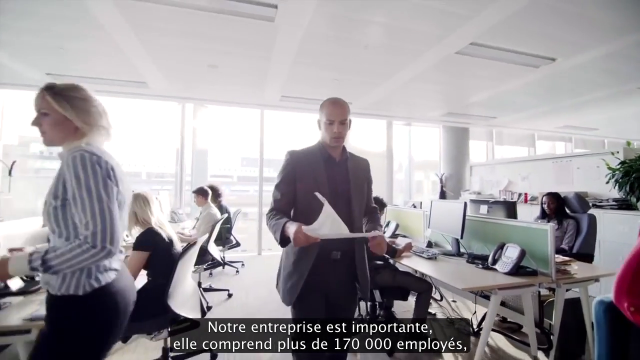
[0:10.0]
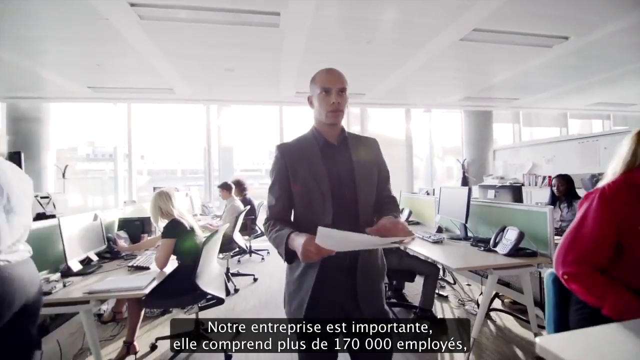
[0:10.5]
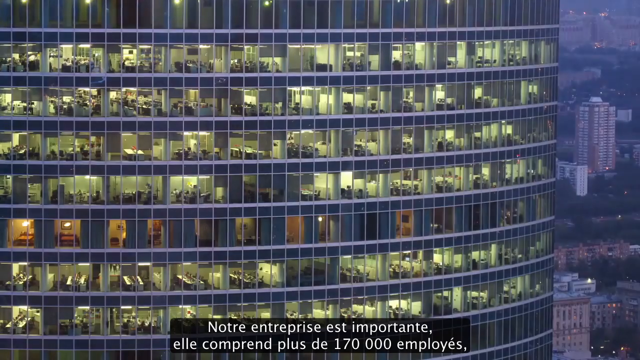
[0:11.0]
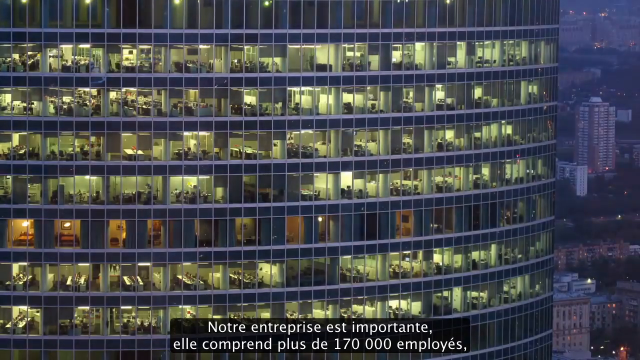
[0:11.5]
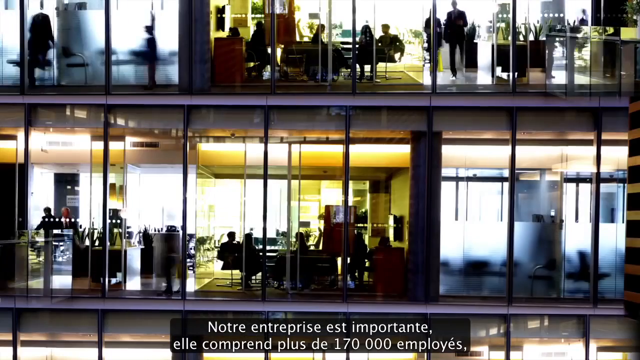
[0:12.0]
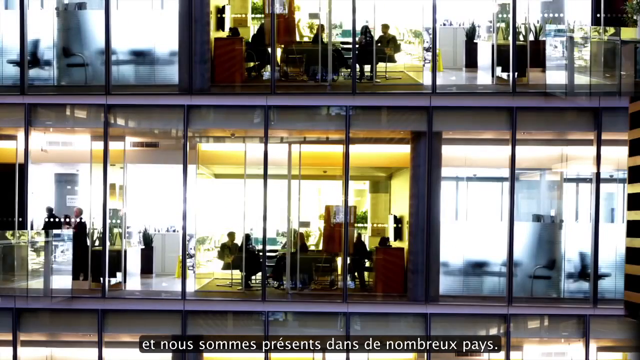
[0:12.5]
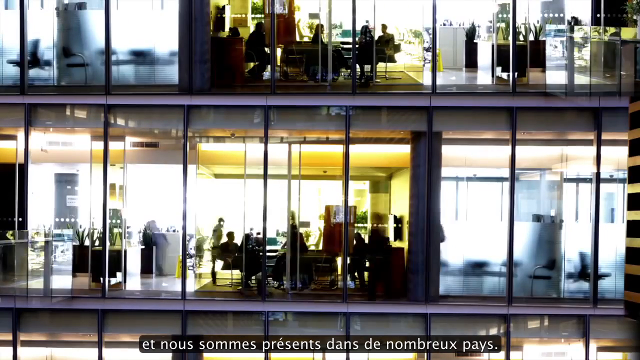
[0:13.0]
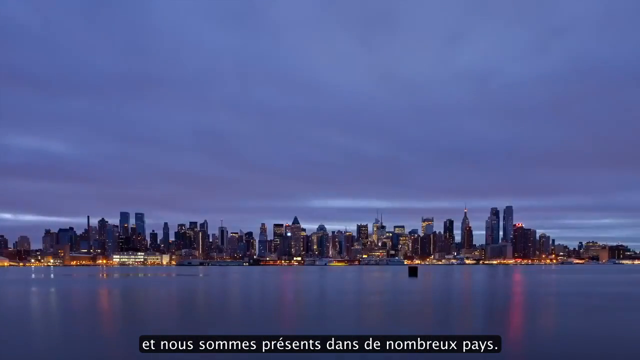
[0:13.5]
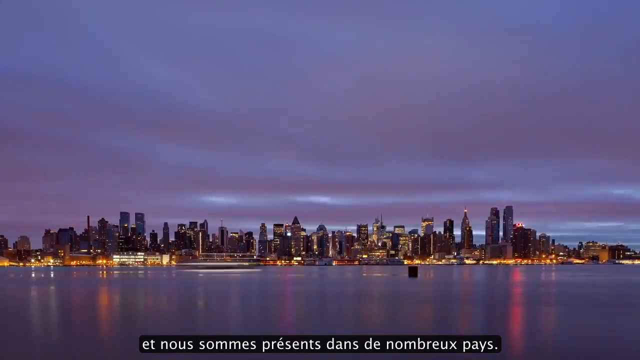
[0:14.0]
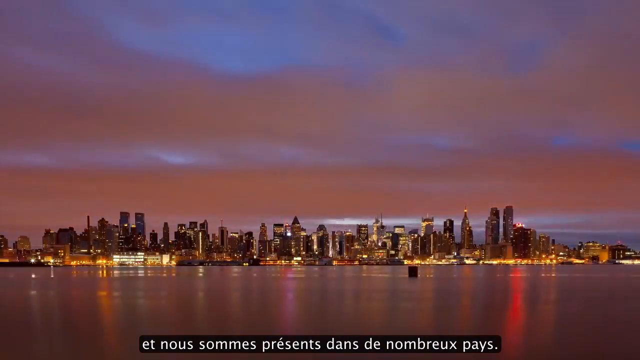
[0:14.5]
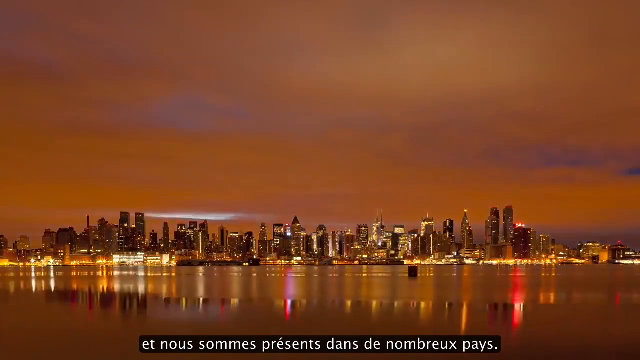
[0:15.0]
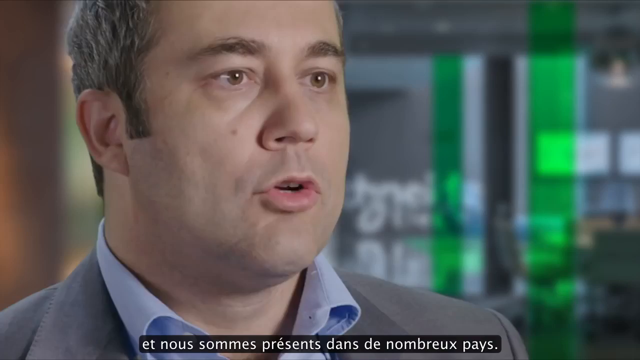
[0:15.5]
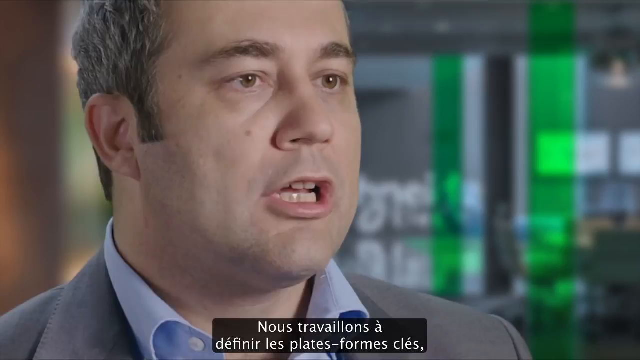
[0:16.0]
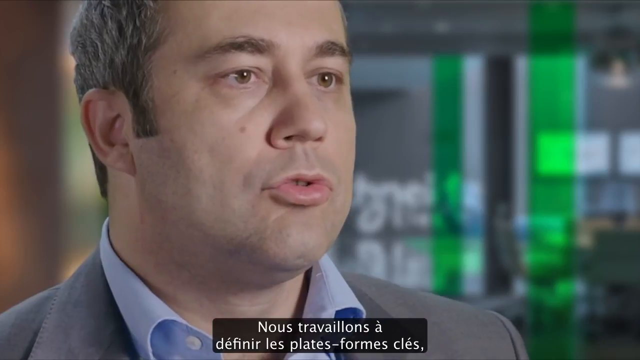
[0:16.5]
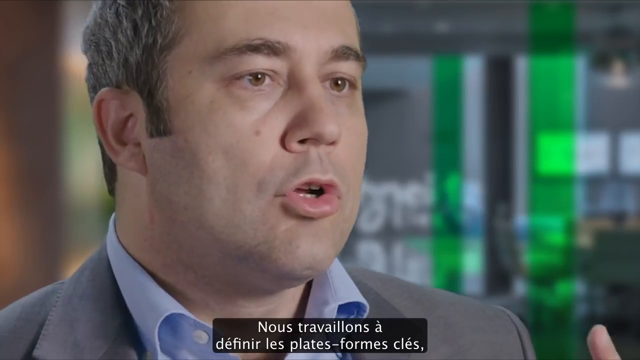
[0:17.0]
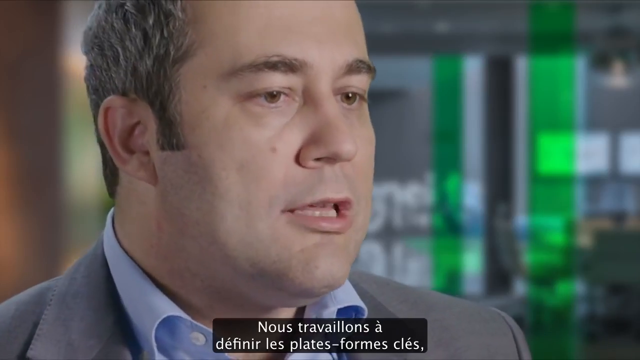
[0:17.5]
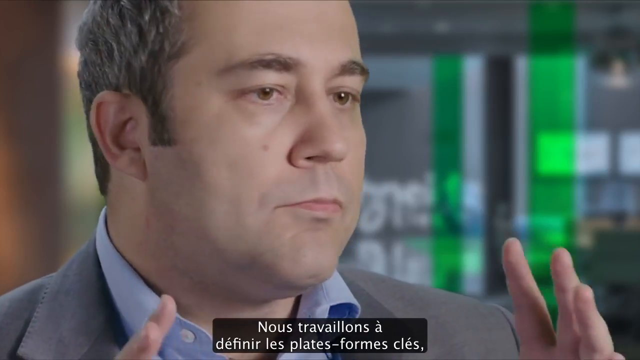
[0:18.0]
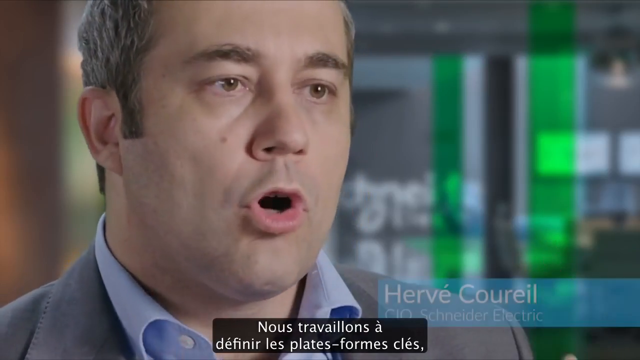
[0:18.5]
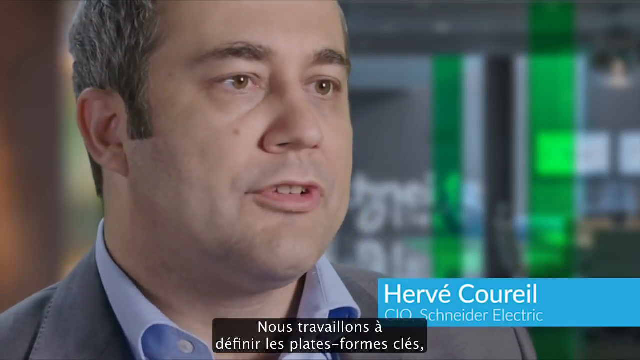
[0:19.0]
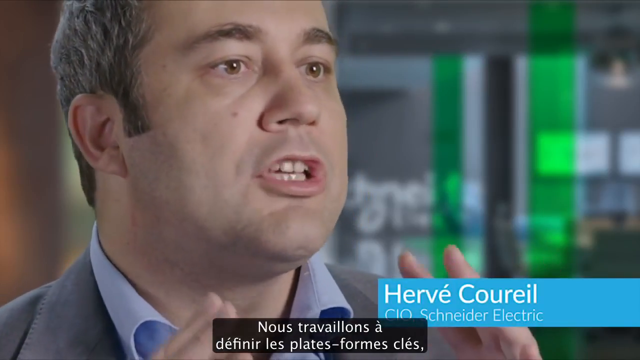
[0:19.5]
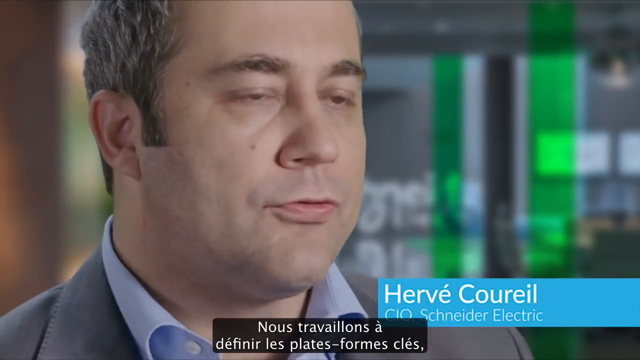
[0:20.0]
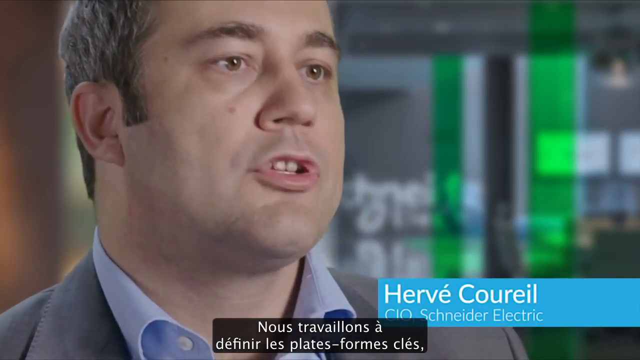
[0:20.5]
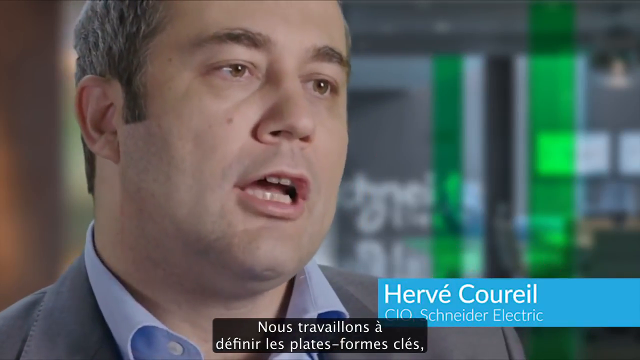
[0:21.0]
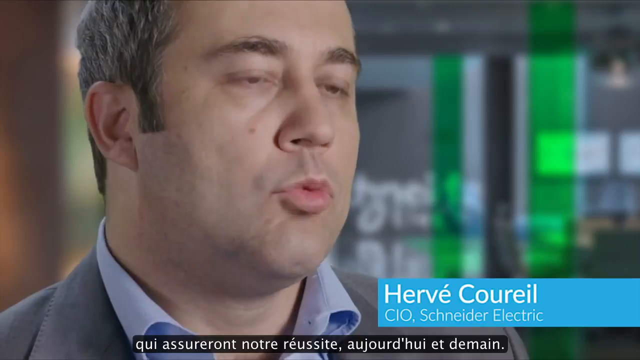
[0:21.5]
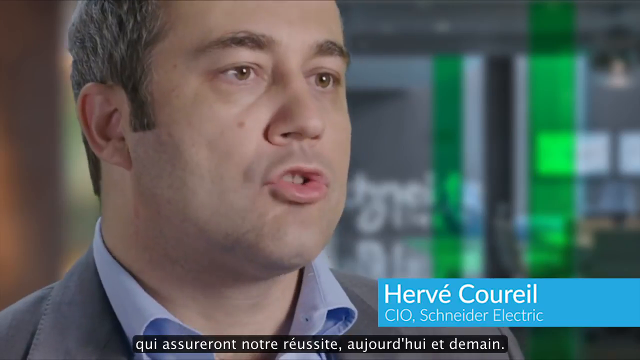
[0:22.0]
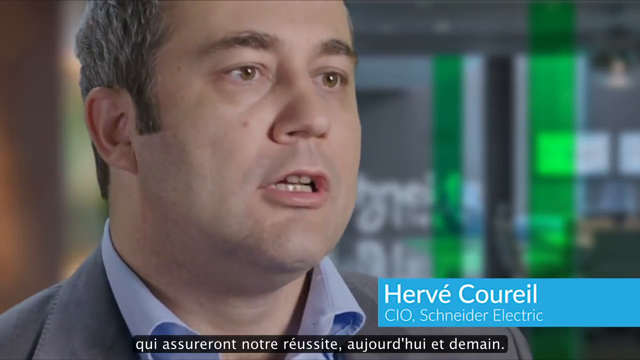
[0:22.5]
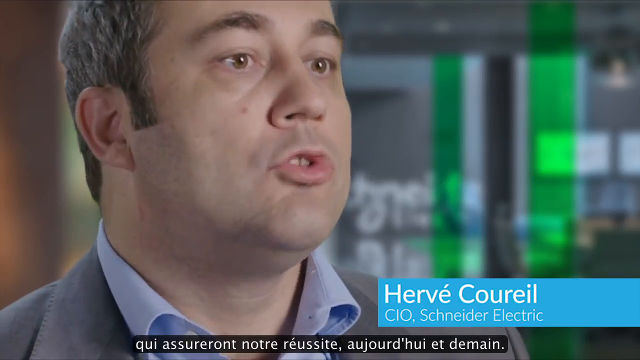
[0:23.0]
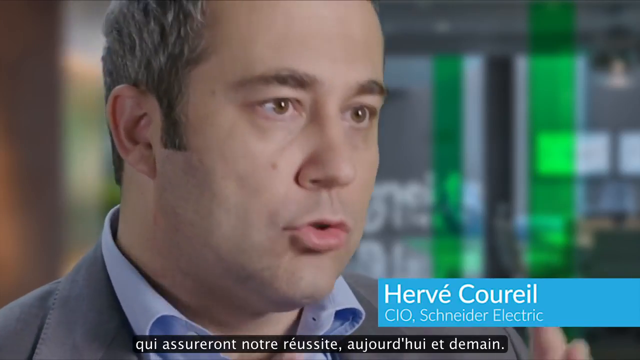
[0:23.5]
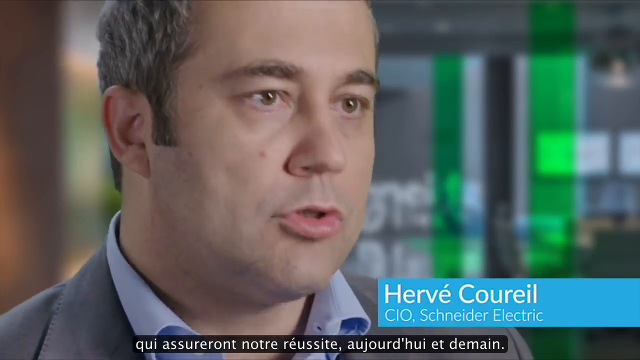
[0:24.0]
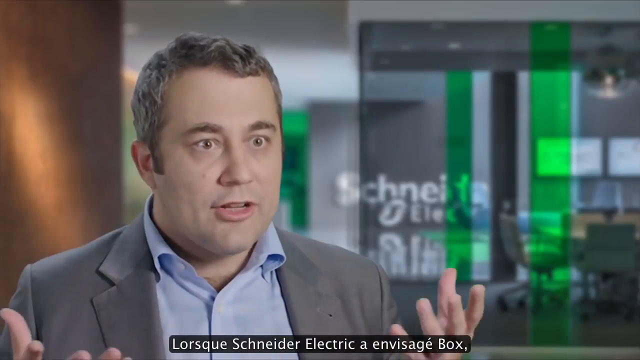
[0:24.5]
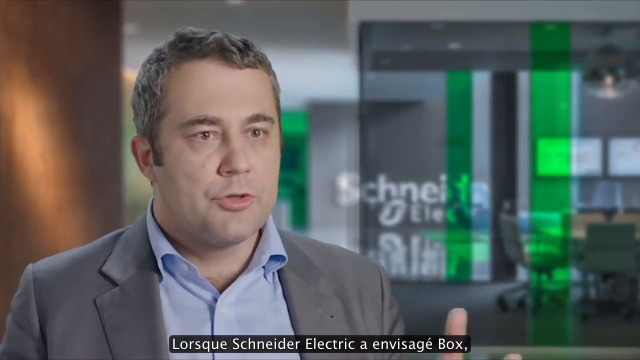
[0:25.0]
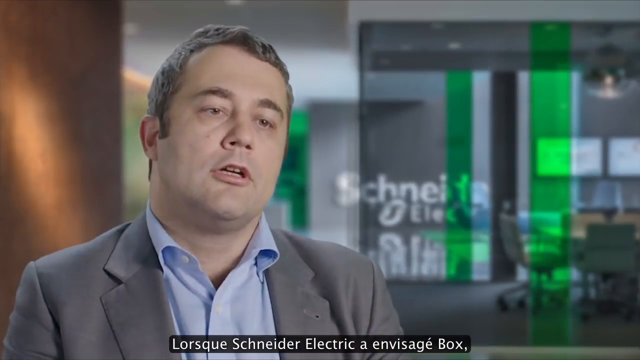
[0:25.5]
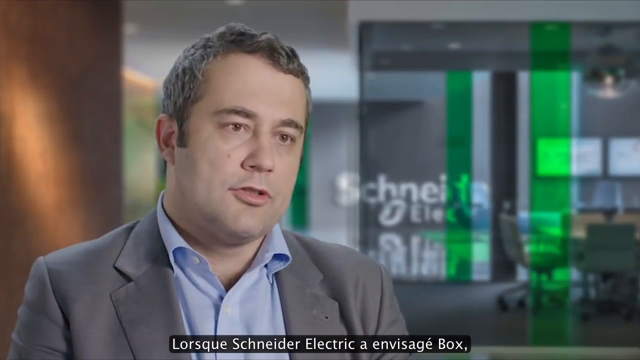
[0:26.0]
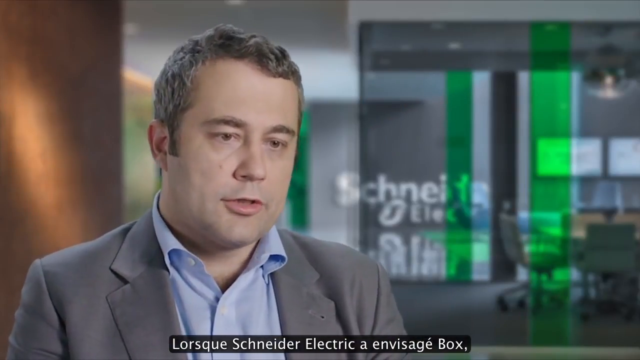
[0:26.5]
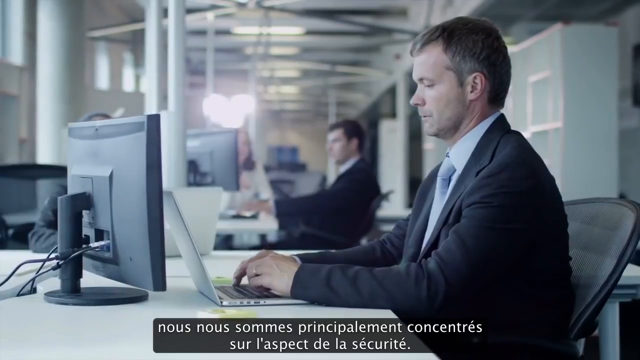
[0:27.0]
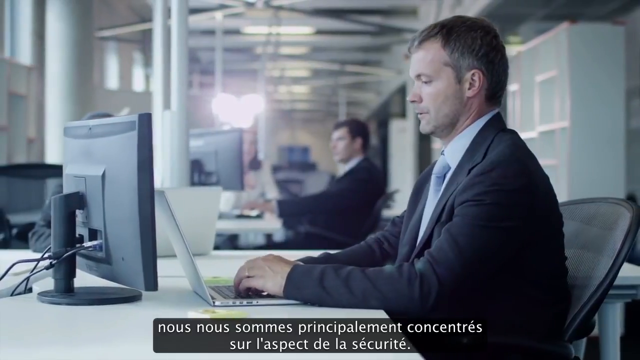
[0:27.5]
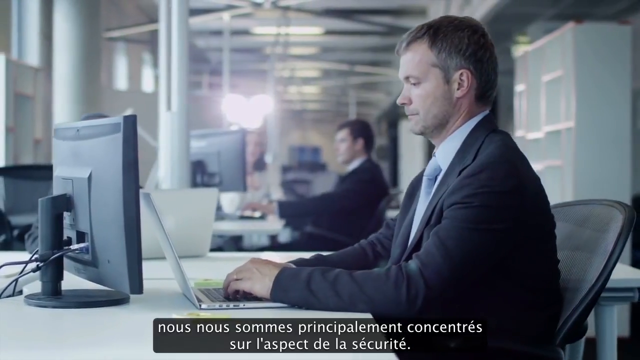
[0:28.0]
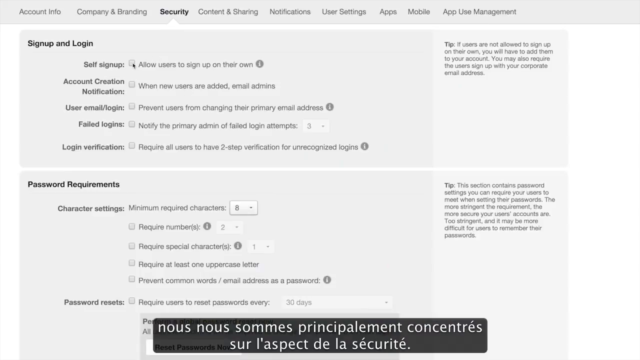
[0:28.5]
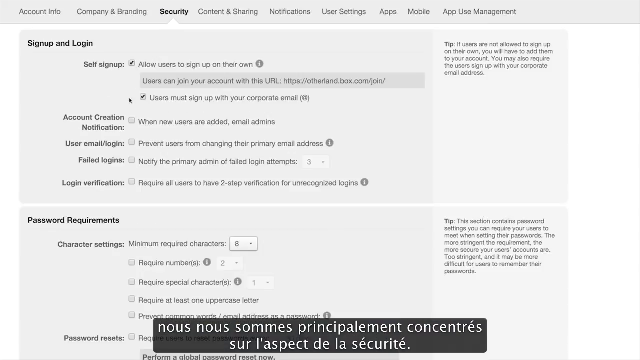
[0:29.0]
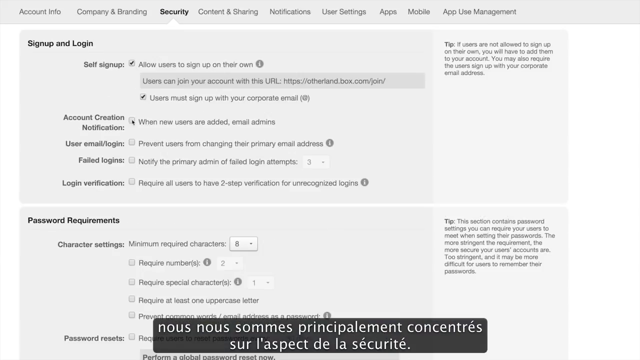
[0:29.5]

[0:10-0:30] The office appears to belong to a very large company with many offices, and the blocks and offices are shown from the outside. The city is then seen with its lights on, next to the ocean, and the view changes as time passes, from daytime to evening and then to morning. A man named Ev Correal, the CIO of the Skanda Electric, is shown talking and explaining something, and he seems worried. People are busy on their laptops in the busy office, and people at home are also busy on their laptops.